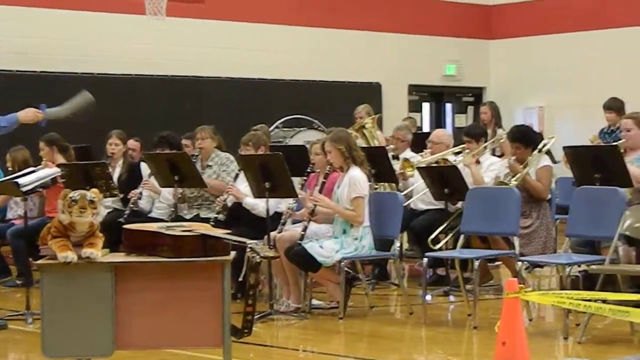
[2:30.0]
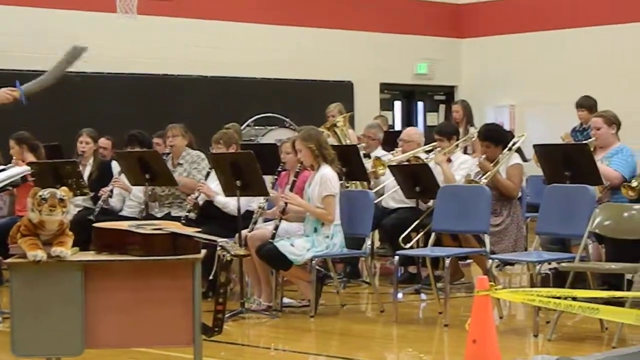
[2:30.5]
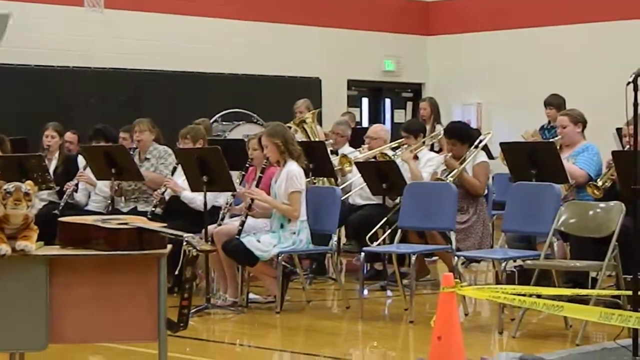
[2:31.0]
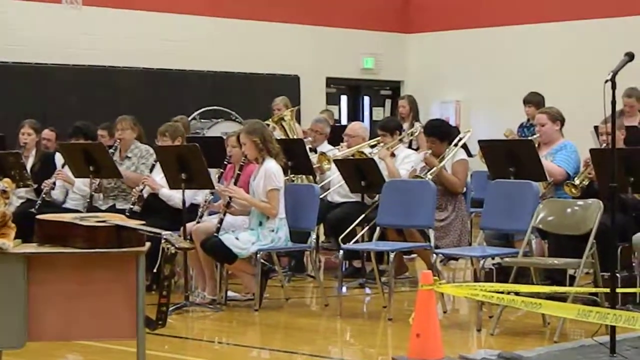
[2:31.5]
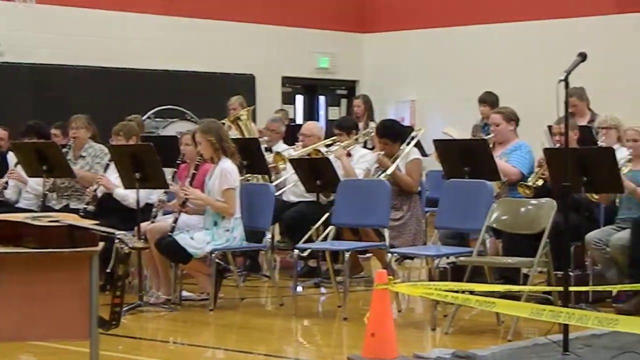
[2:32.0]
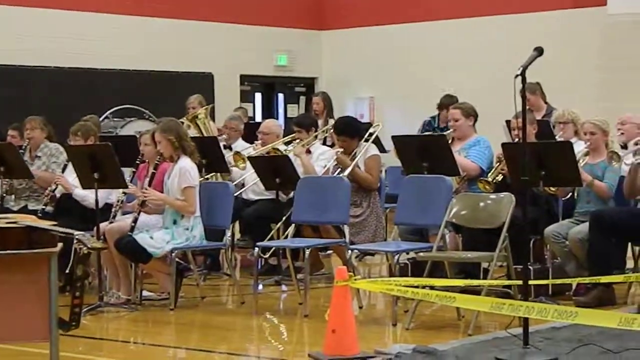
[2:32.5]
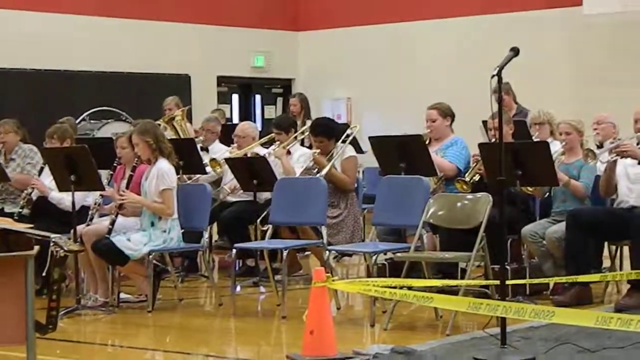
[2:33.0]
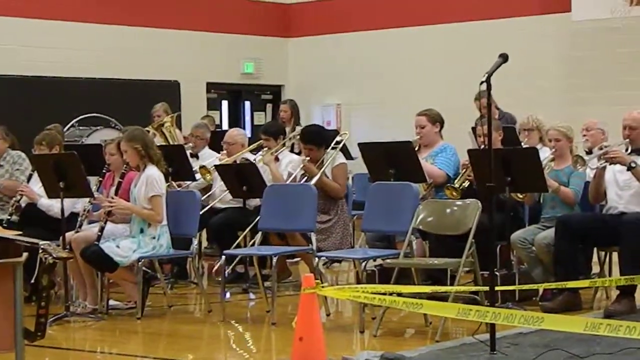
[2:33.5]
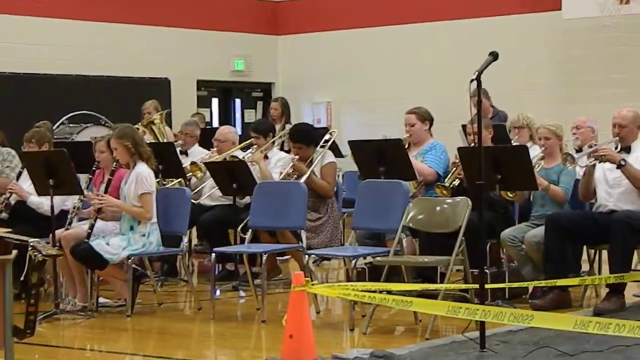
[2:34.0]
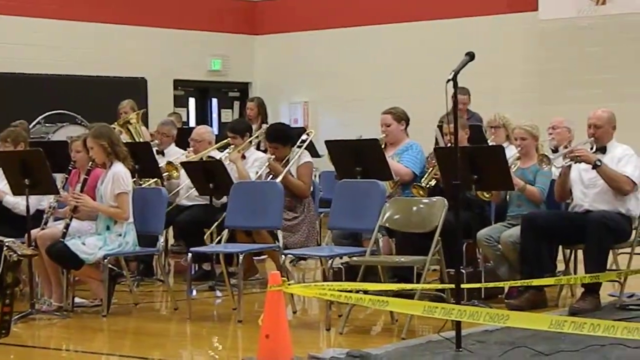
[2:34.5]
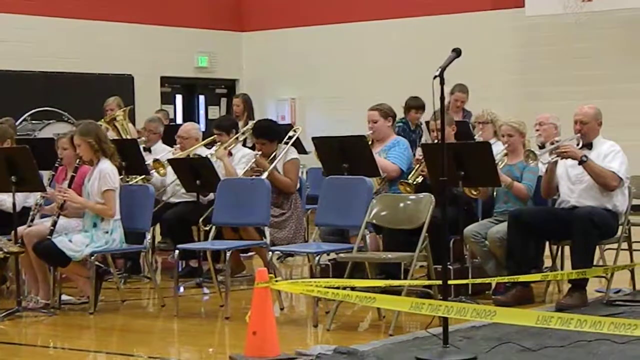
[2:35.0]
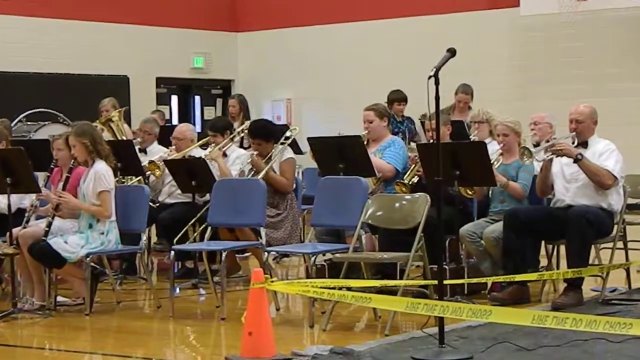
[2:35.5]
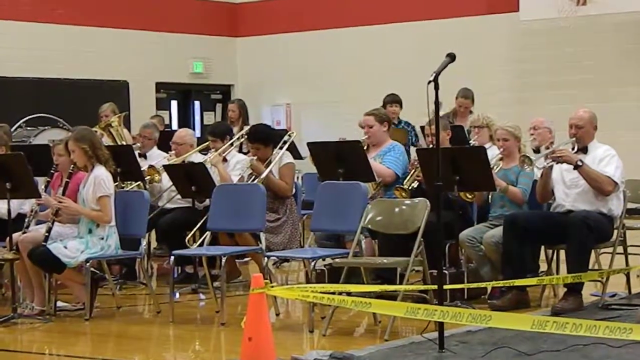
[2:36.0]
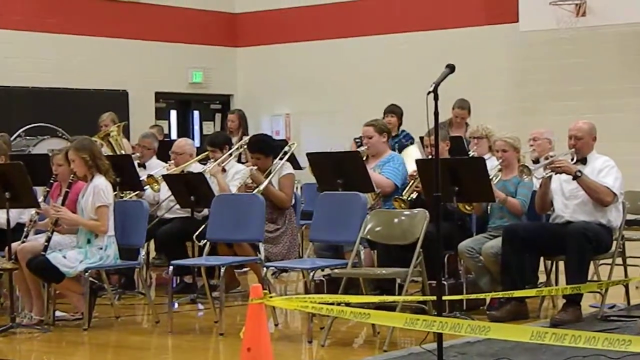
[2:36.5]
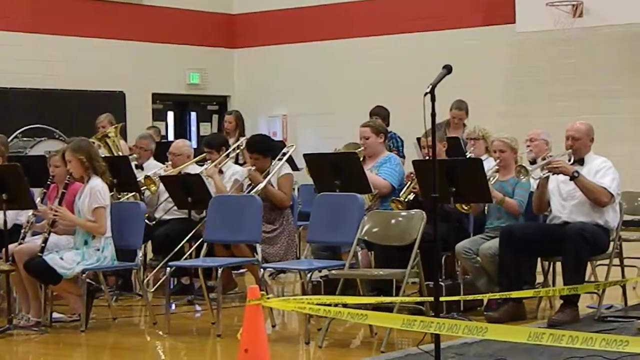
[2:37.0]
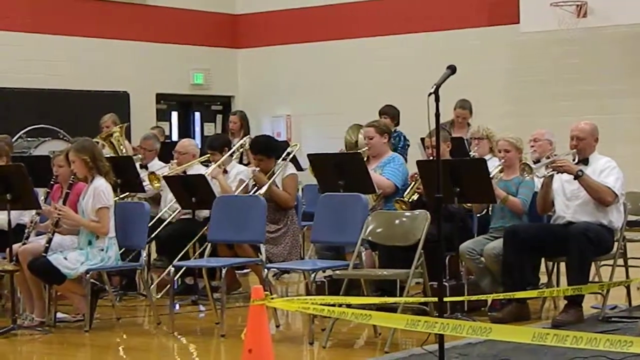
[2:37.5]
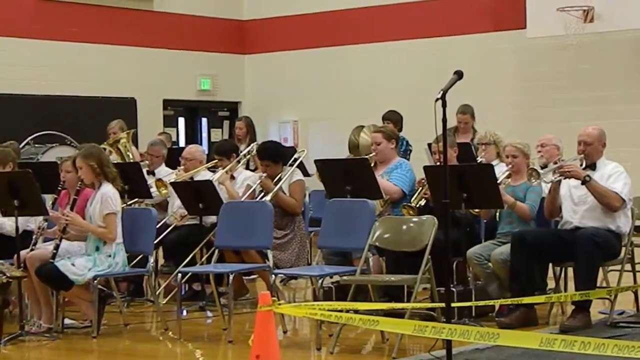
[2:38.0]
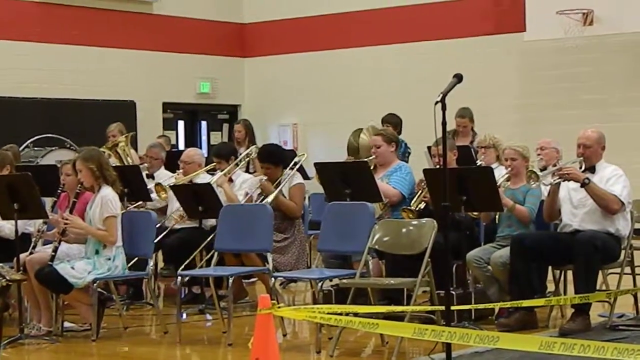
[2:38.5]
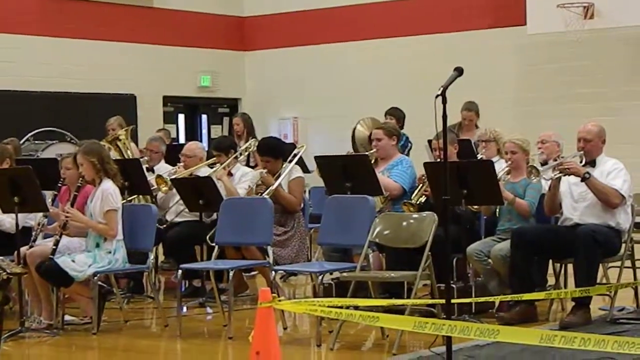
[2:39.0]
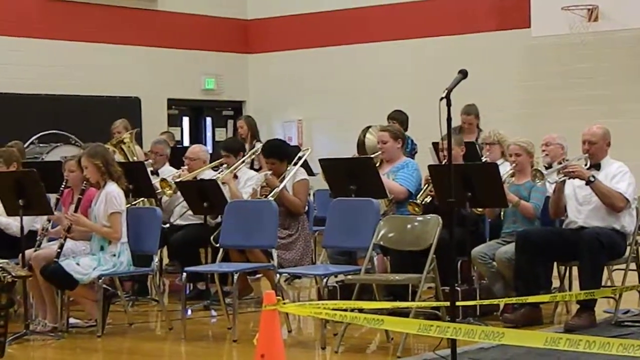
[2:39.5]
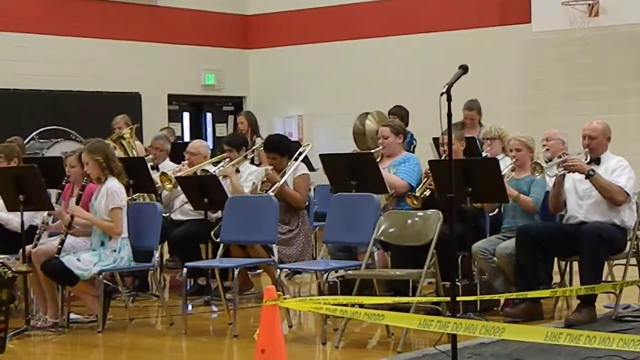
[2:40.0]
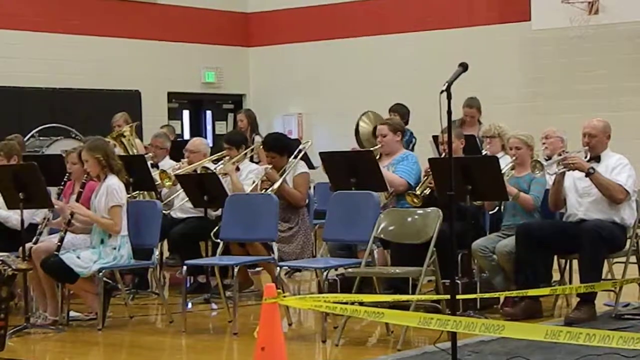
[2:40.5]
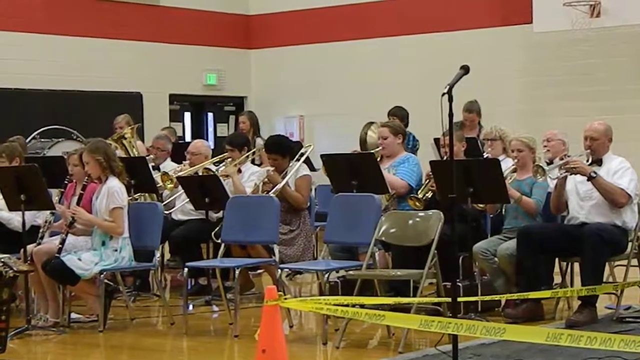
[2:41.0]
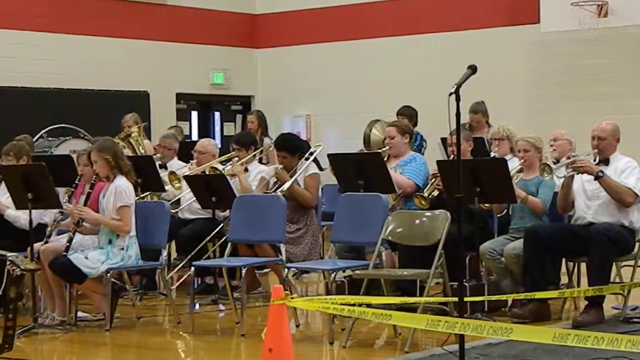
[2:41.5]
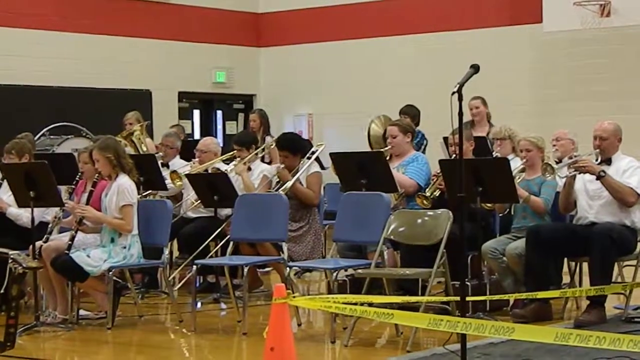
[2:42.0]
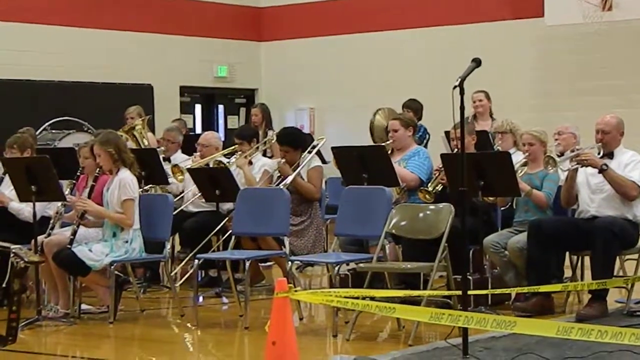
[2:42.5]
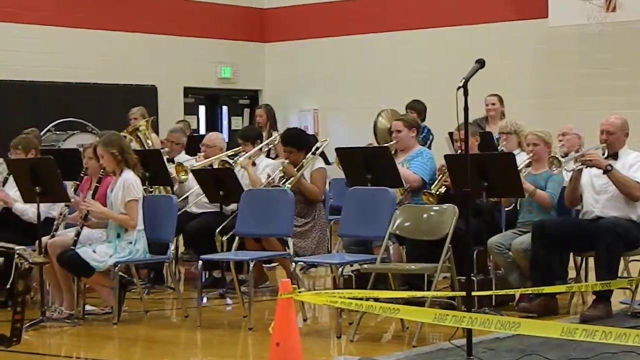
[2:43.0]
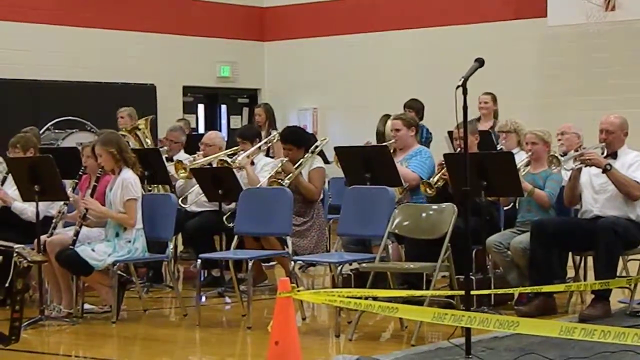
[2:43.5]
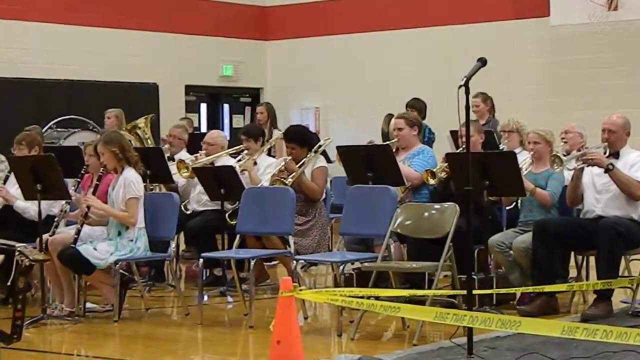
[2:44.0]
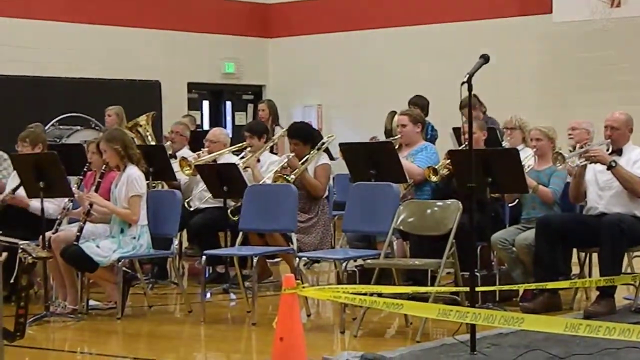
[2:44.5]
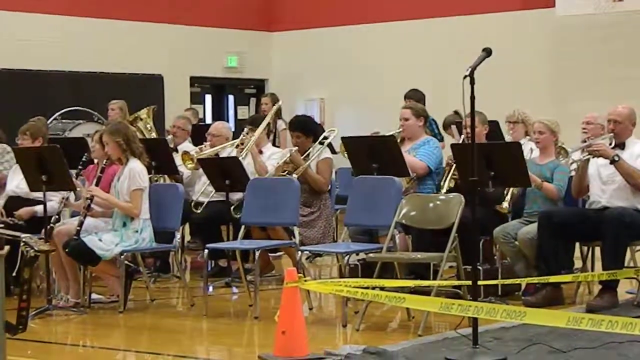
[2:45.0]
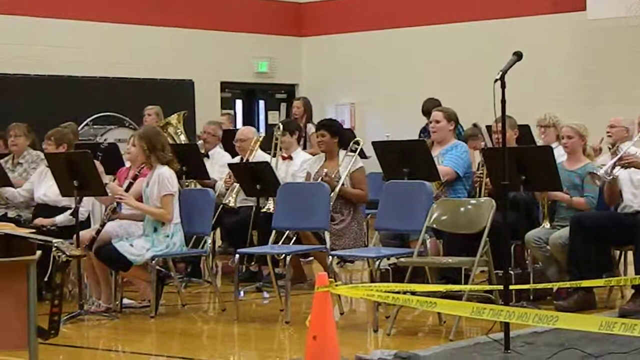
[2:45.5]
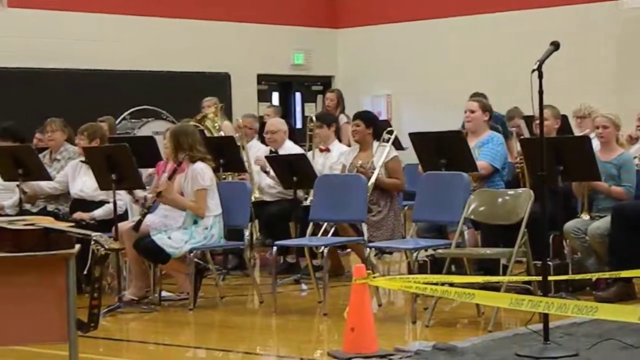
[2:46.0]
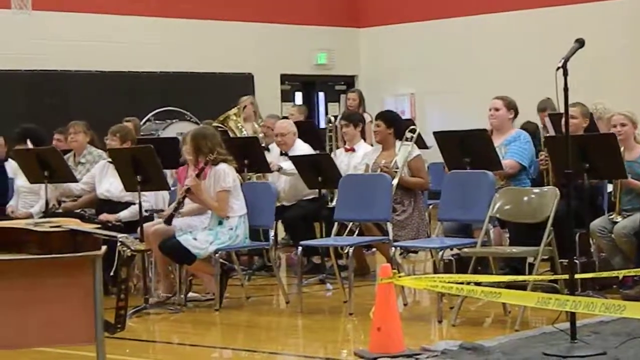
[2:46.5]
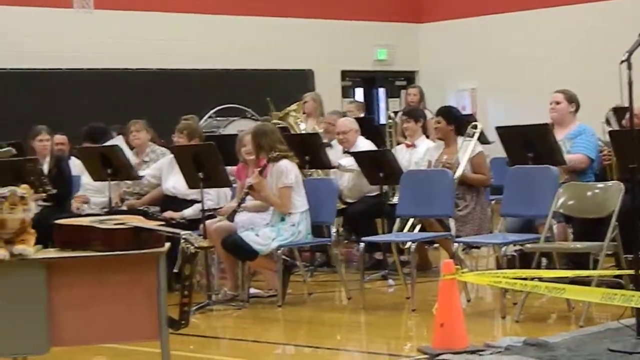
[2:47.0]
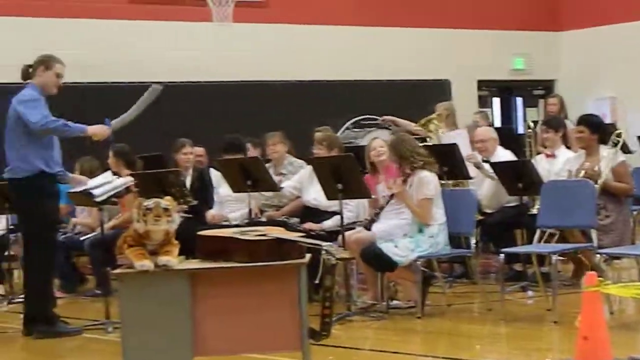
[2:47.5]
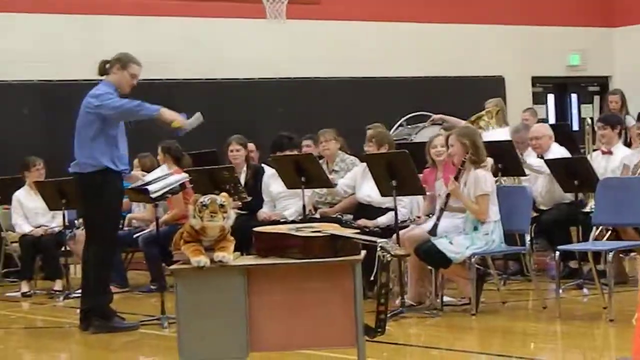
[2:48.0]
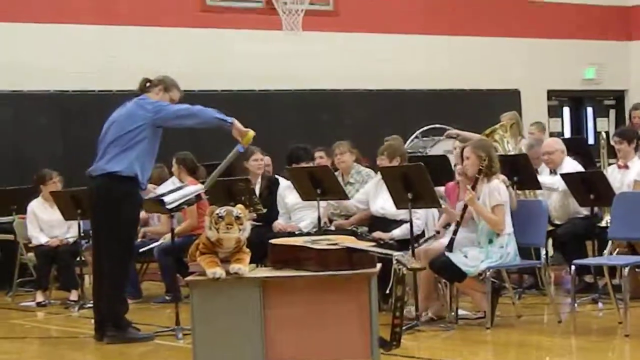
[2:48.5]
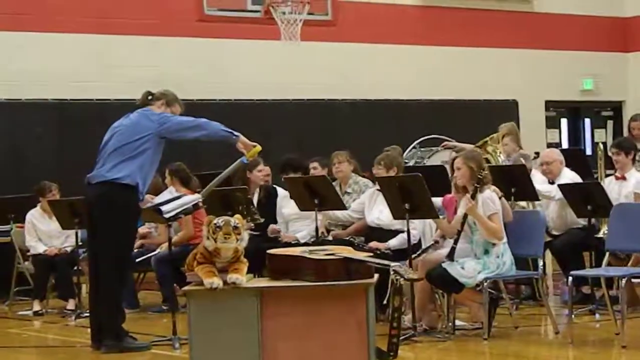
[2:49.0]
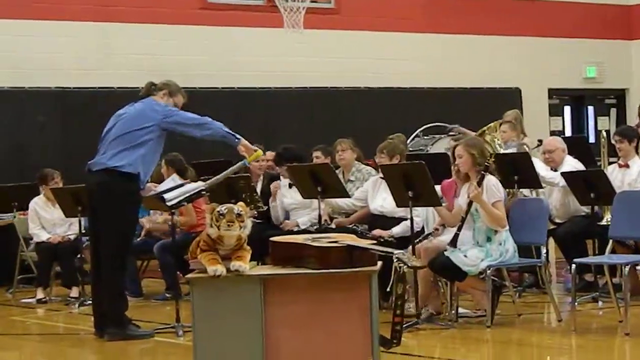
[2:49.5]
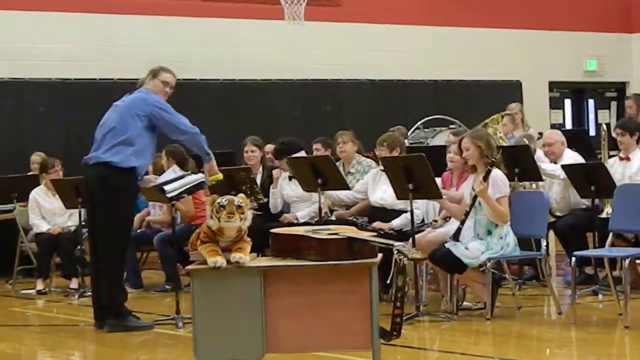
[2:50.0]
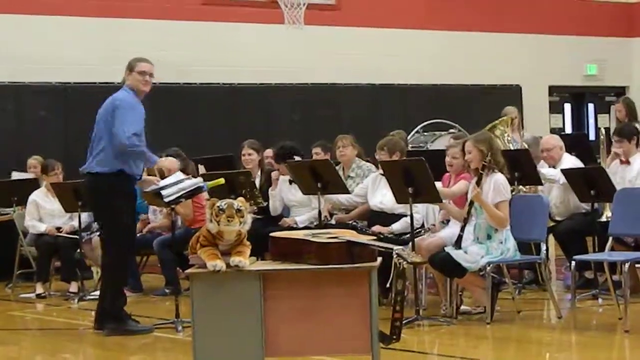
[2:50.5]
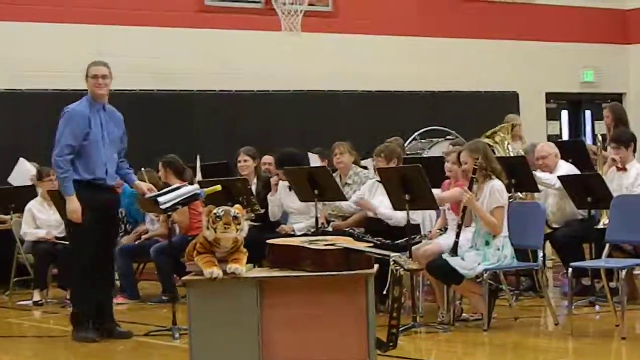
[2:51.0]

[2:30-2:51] The band performance in a gymnasium concludes. At first the players are still playing their instruments; about midway through, they all stop, look up, and lower their instruments as if they have finished performing. There are people playing brass instruments, and someone holding cymbals stands behind them. The camera pans over to the conductor, who has been using a plastic toy sword to conduct the band. When they are done, he rests the toy sword on the podium in front of him, looks over to the right and smiles. The band members look up at him. Basketball hoops are visible behind them on two of the walls. At the front of the room is a desk with a stuffed tiger and a guitar resting on top of it. To the right side of the band is an area cordoned off with yellow police tape, with a microphone on a stand standing in it.